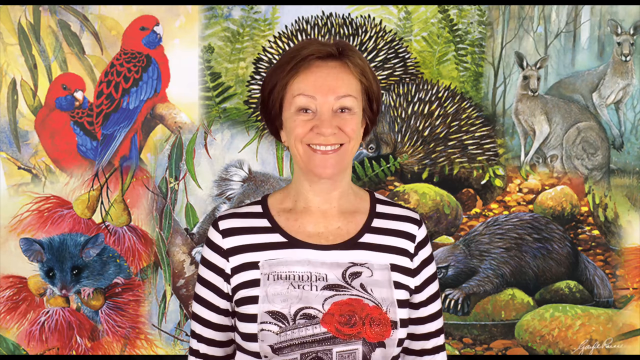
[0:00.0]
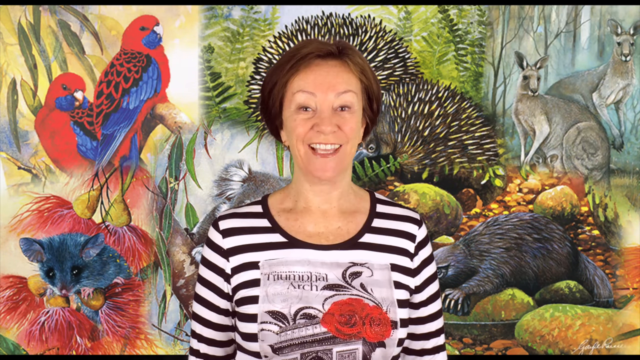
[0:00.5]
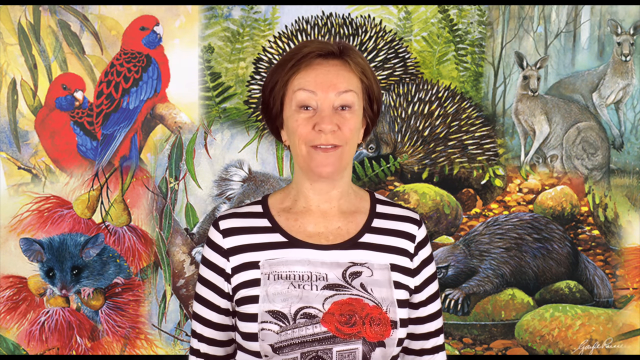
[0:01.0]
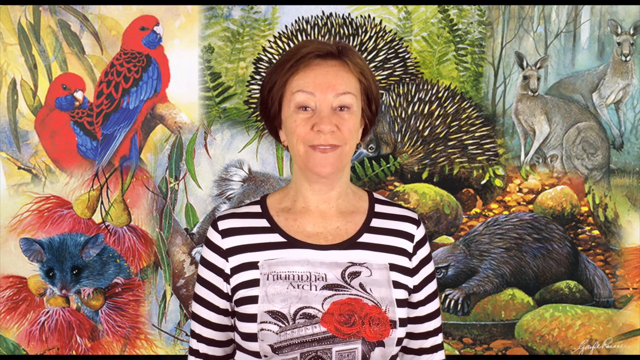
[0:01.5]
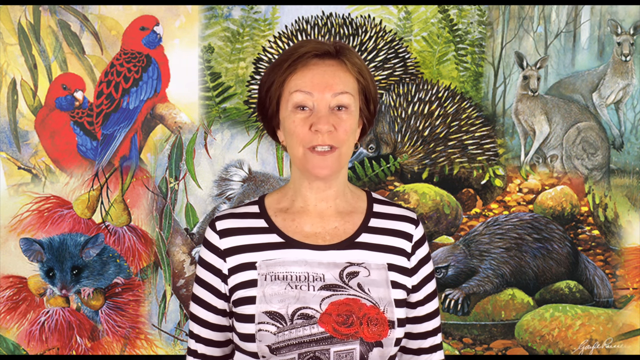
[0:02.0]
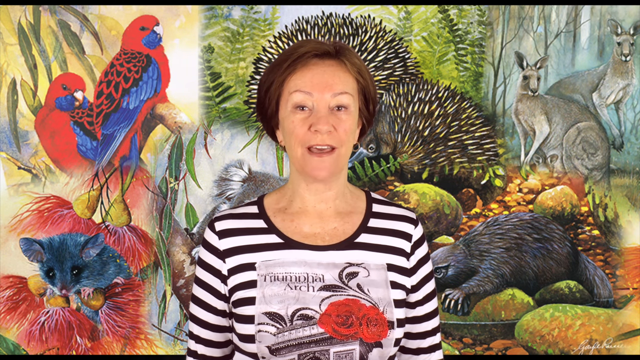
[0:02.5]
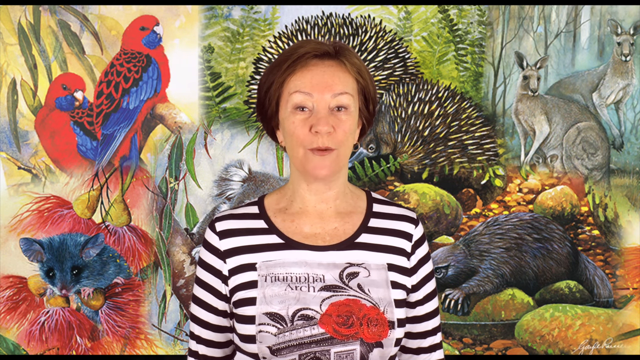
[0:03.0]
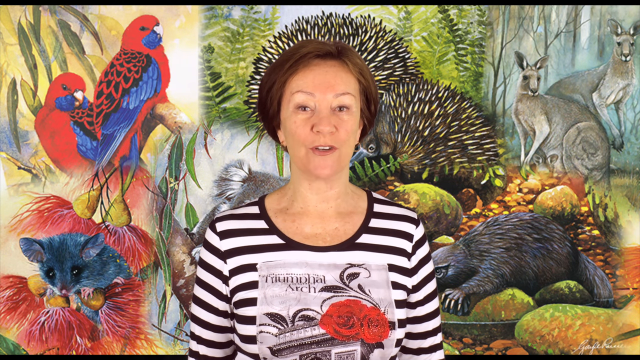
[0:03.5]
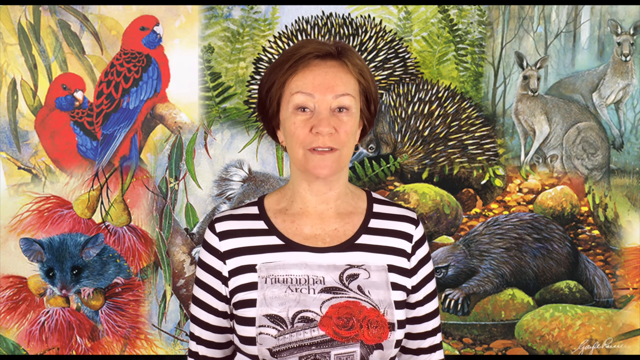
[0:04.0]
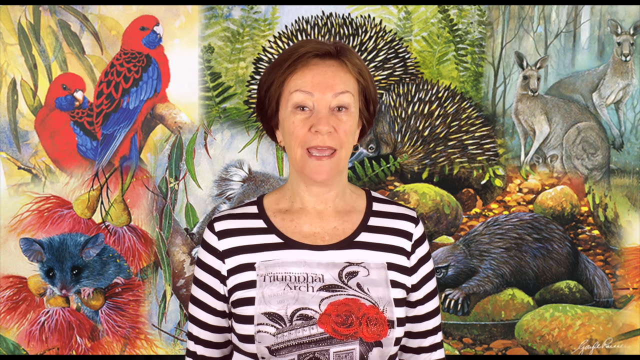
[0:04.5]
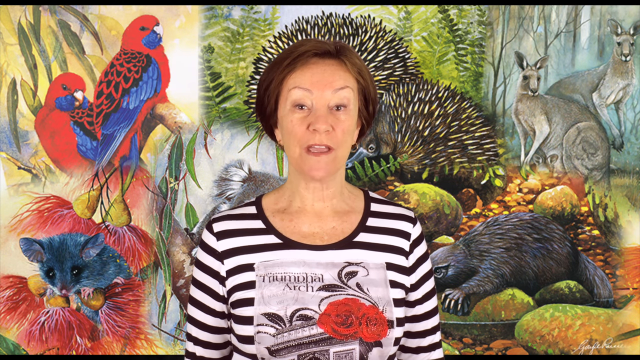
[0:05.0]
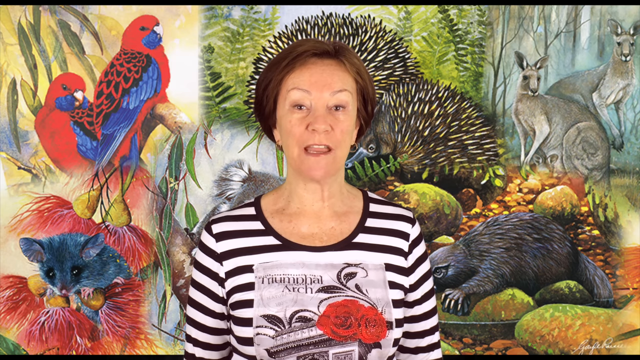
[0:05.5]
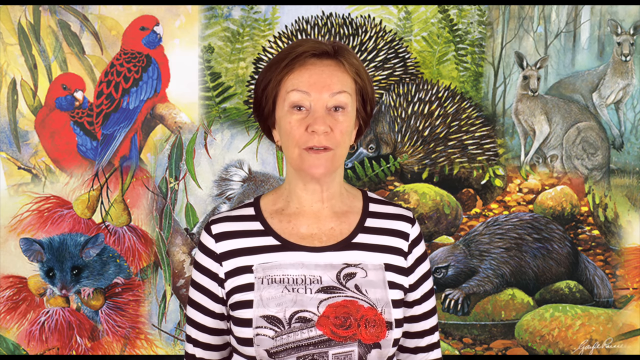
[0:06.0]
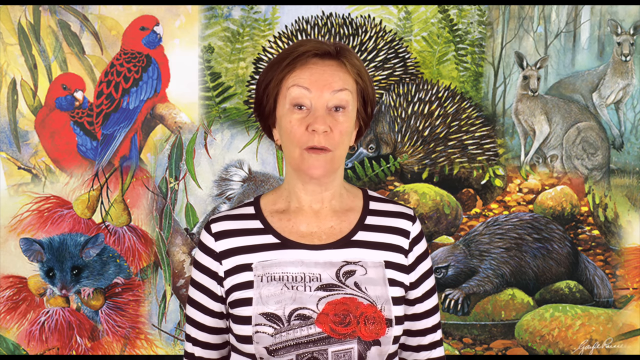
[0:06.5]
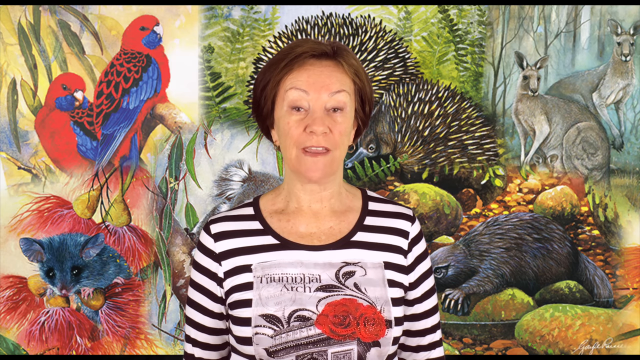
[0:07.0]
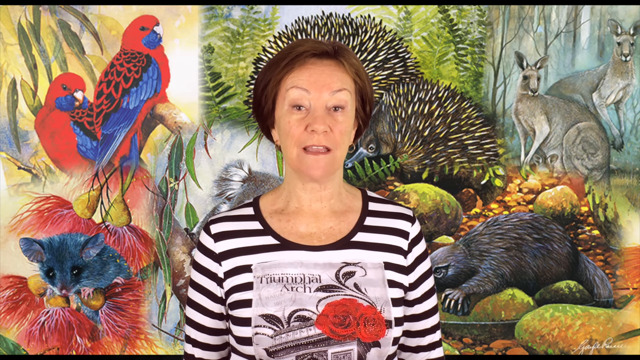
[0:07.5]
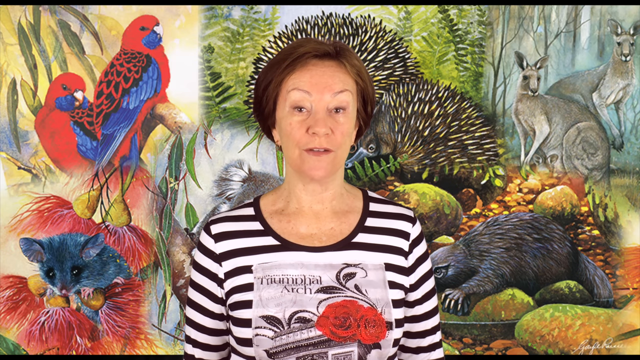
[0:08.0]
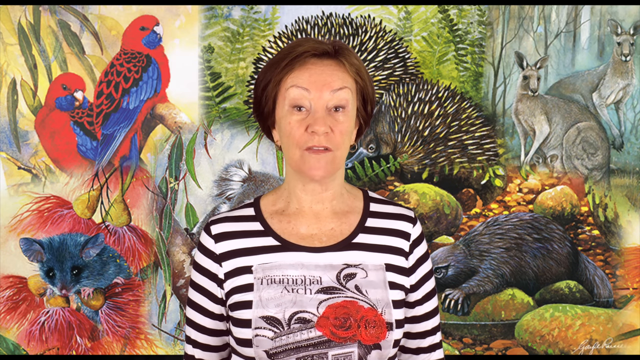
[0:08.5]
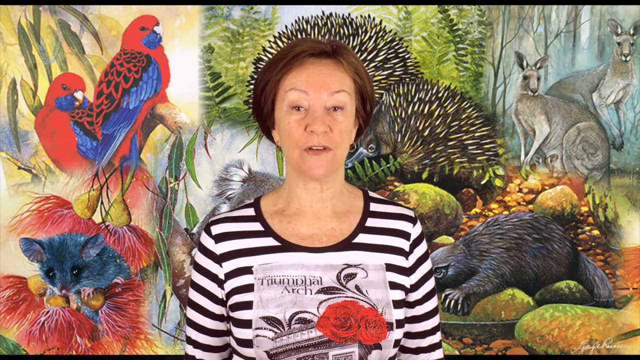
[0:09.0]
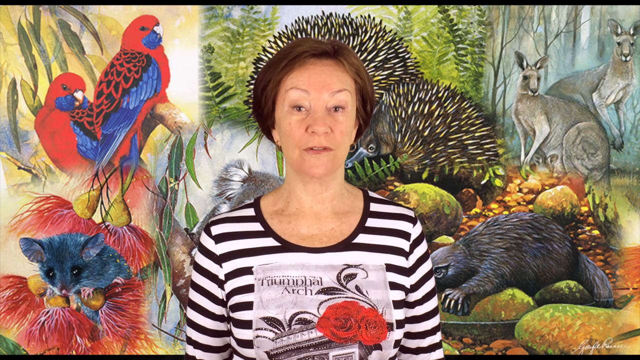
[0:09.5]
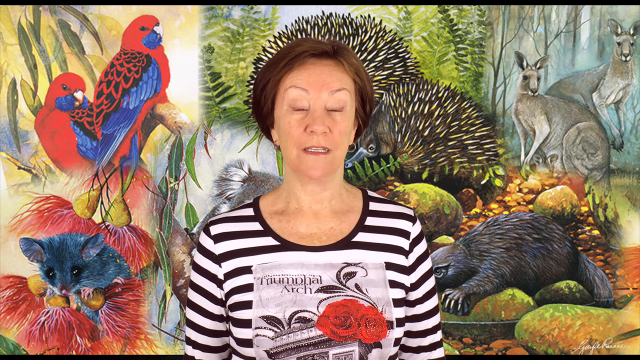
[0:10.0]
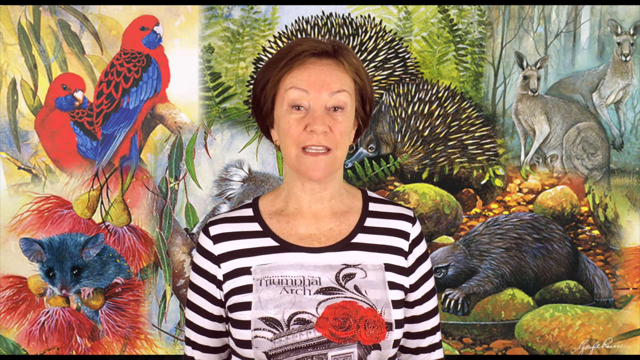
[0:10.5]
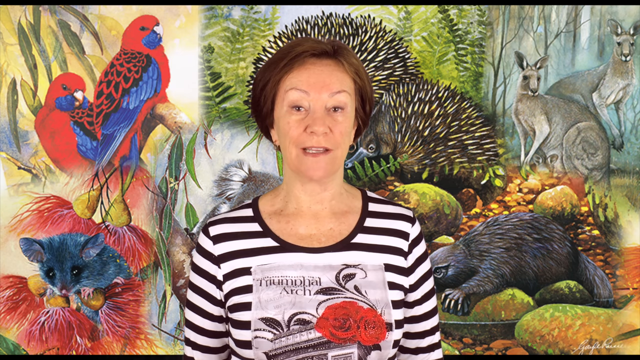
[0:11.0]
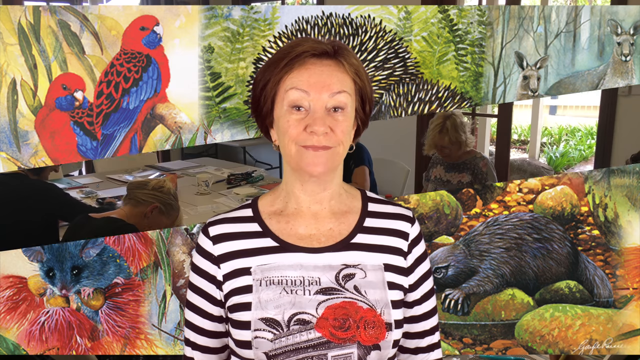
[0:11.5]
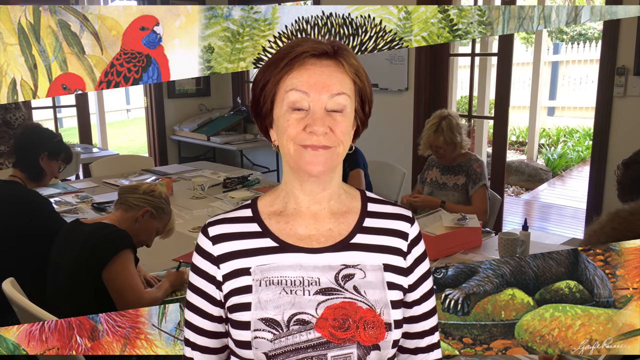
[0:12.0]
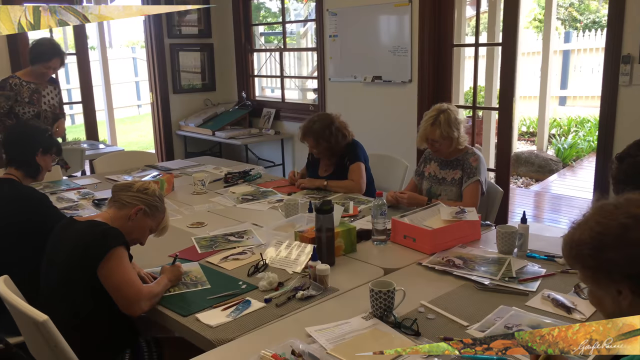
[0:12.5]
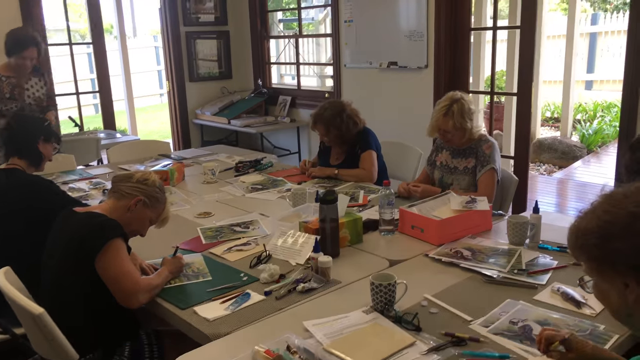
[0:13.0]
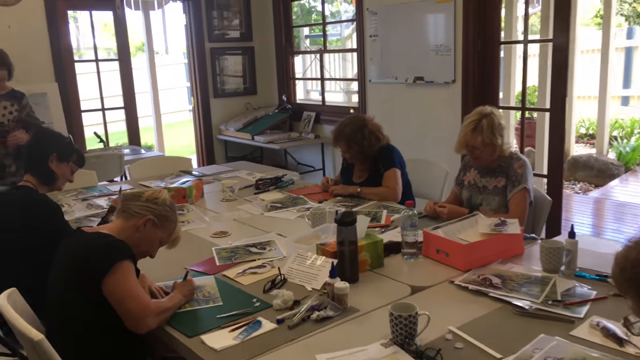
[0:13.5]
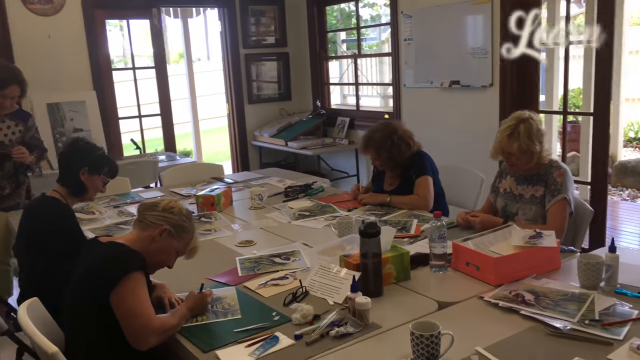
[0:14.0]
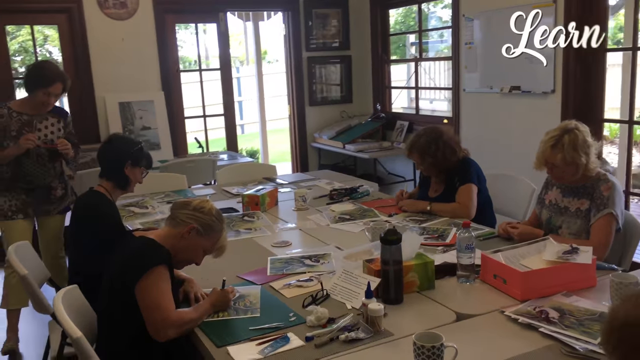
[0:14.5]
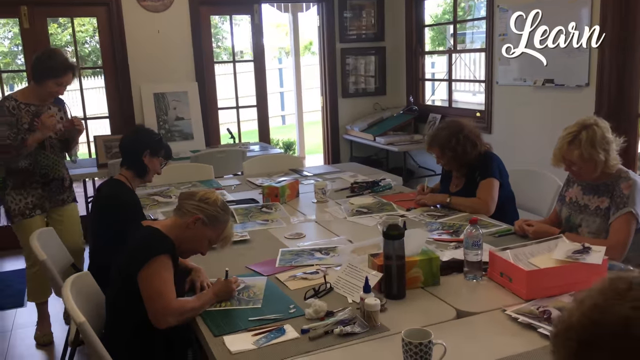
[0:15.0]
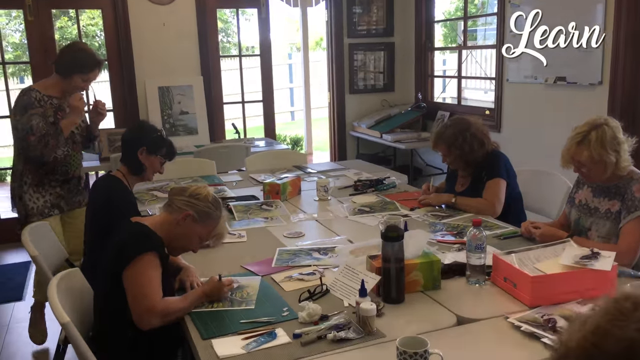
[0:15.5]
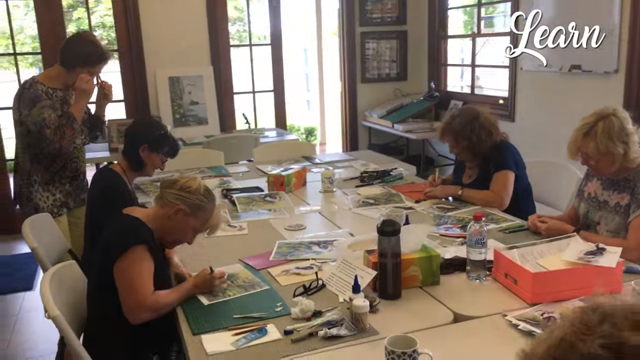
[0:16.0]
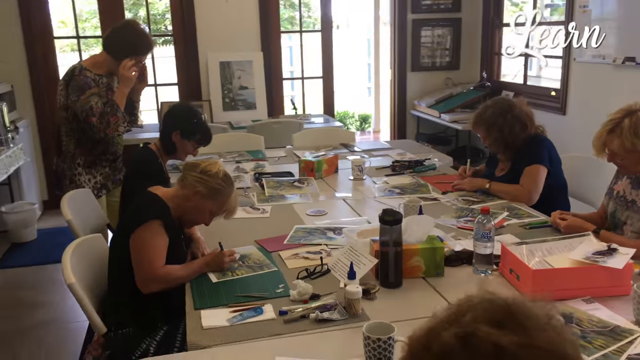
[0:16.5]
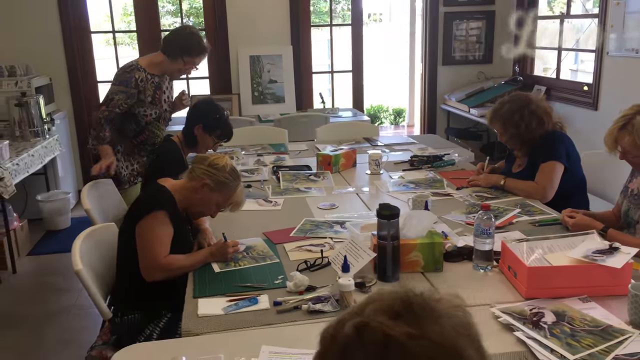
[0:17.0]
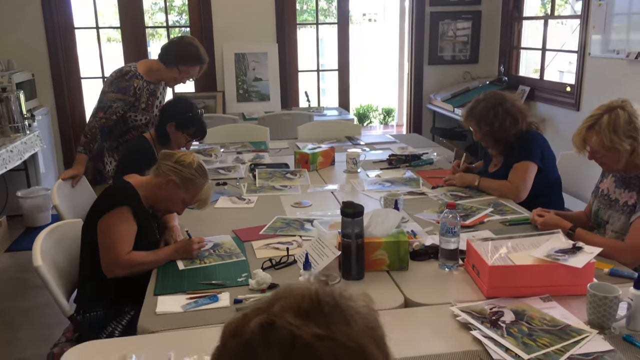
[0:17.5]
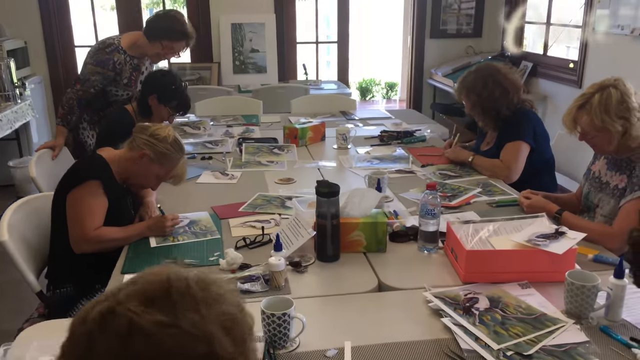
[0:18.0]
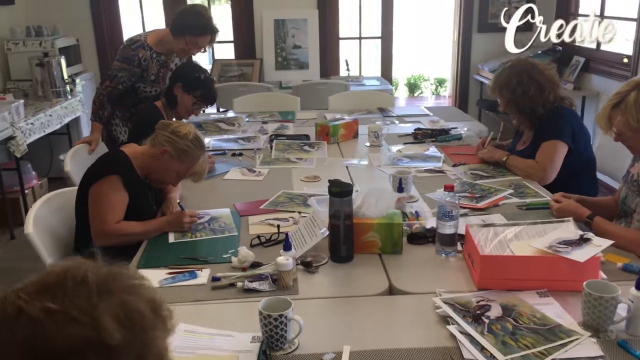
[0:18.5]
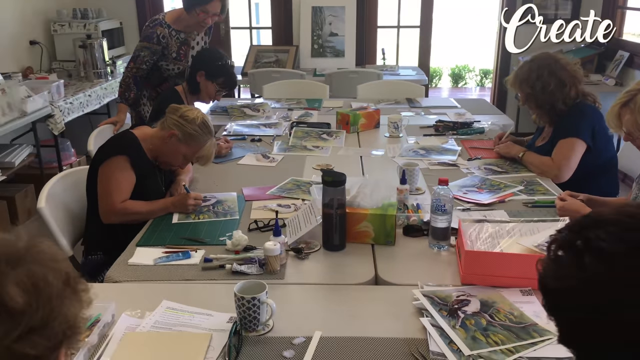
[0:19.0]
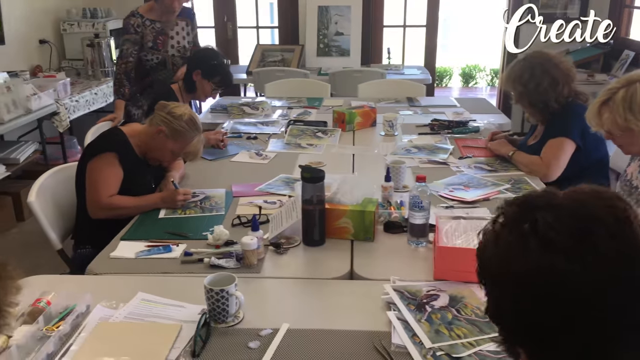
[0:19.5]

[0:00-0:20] A middle-aged white woman with short blonde hair stands on screen, wearing a round-necked black and white striped t-shirt with some rose pattern and writing in a square in the center of the shirt. She speaks for a few seconds. Behind her is a colorful poster or painting showing different kinds of wild animals, such as parrots, kangaroos and raccoons, in a wild setting with different kinds of vegetation. The scene then transitions to a room with a large white table in the middle and students sitting around the table in chairs. The students are also middle-aged women, all short-haired. There is a whiteboard on the wall, and the teacher is also present. The room has windows and two doors and is well lit by natural light, and a gated compound outside is also shown. On the table are various things such as water bottles, coffee mugs, glue, papers and glasses, and the students seem to be drawing something on paper. The words "learn, create" appear at the top right of the screen. The teacher checks the students one by one, leaning towards them.